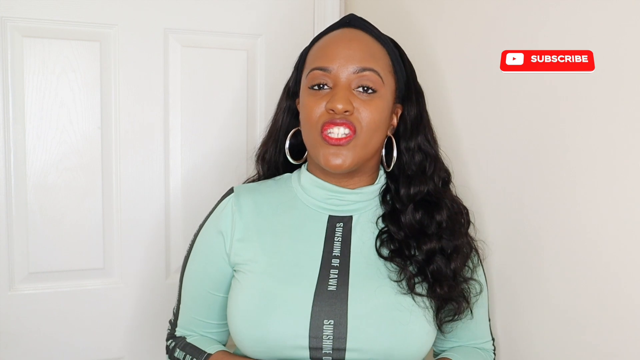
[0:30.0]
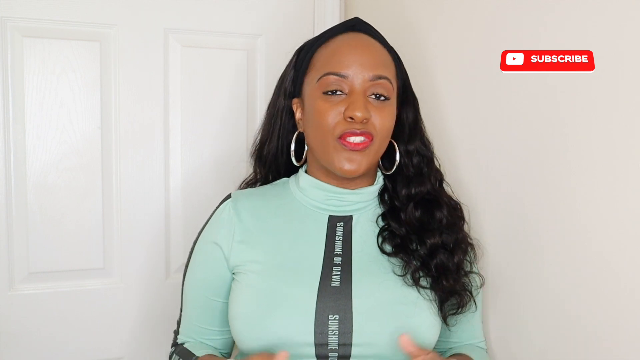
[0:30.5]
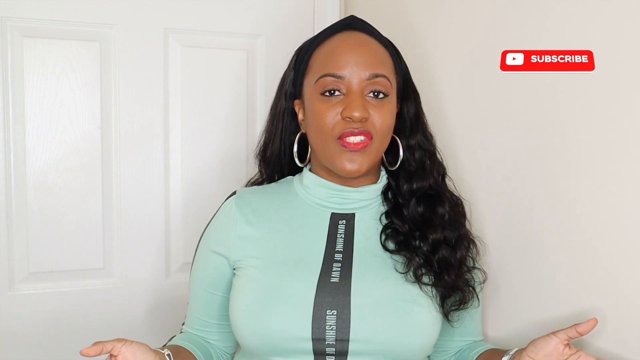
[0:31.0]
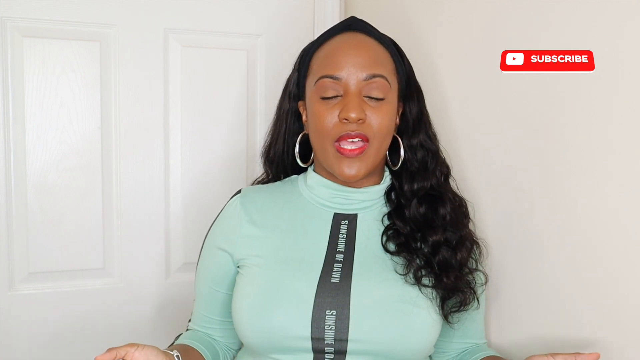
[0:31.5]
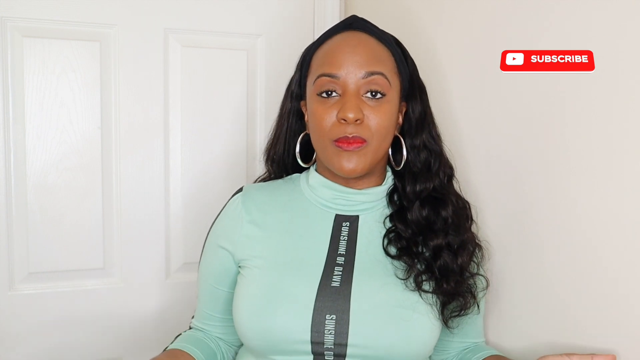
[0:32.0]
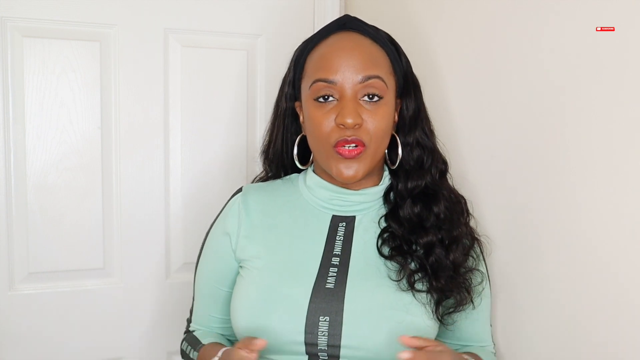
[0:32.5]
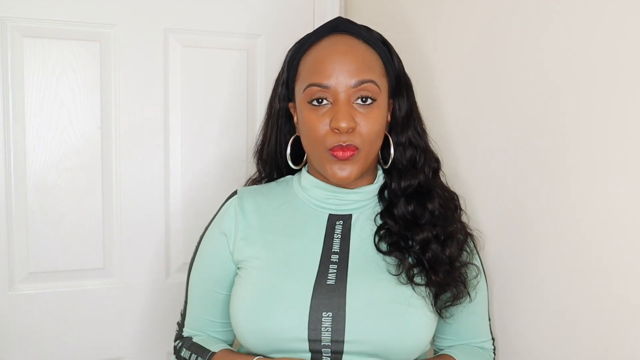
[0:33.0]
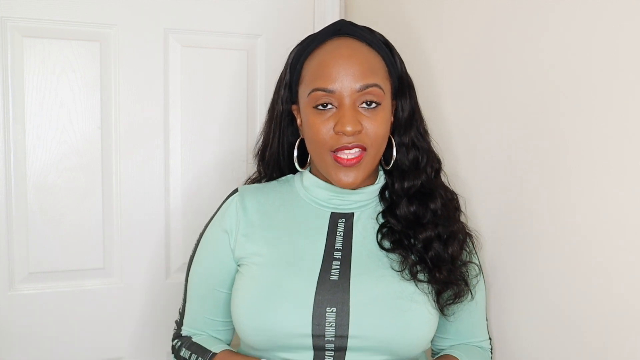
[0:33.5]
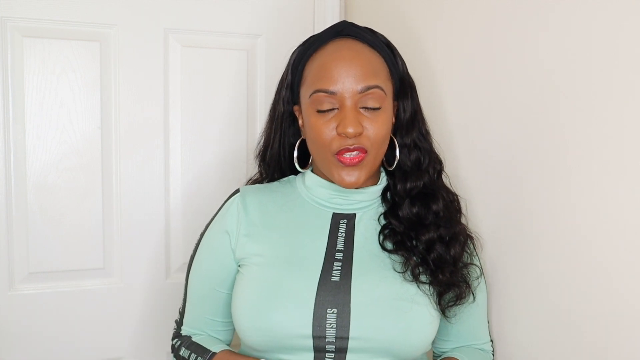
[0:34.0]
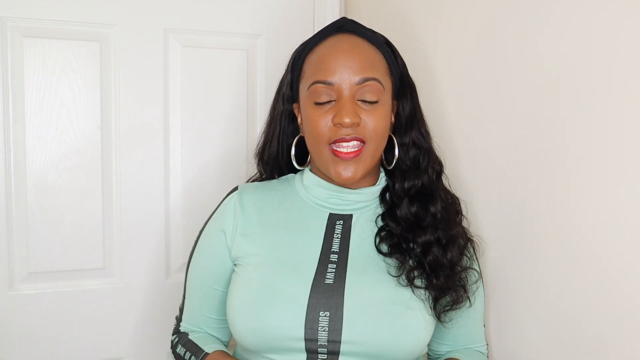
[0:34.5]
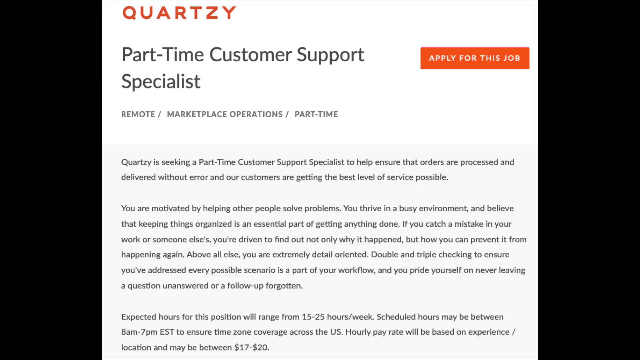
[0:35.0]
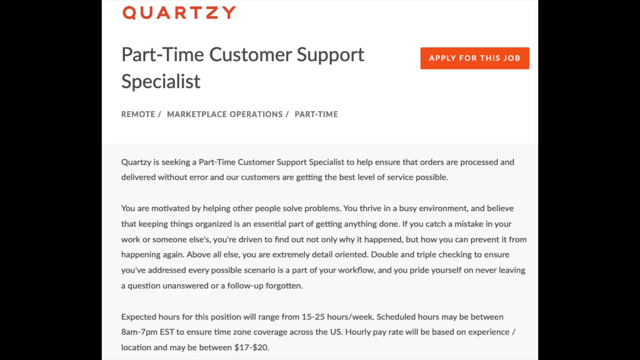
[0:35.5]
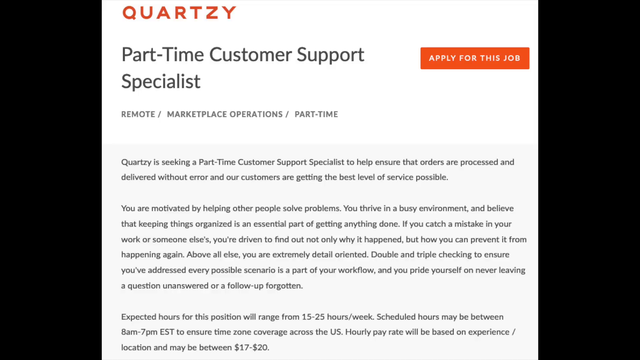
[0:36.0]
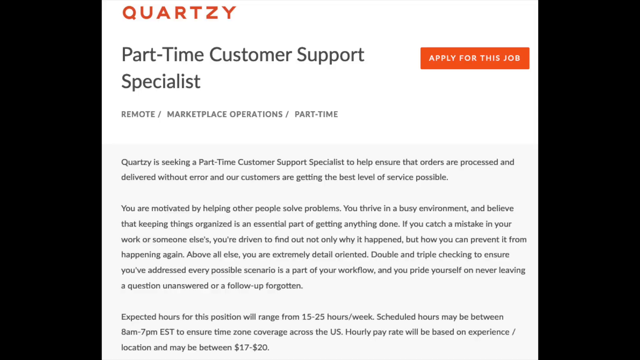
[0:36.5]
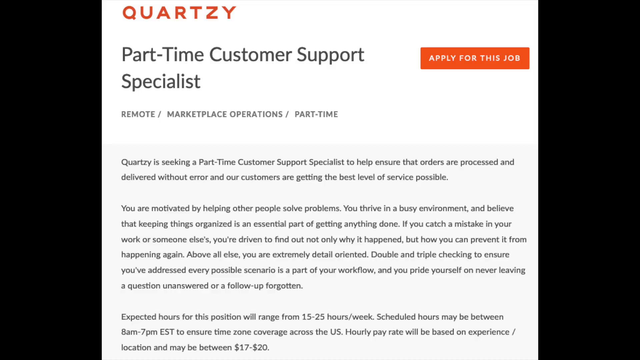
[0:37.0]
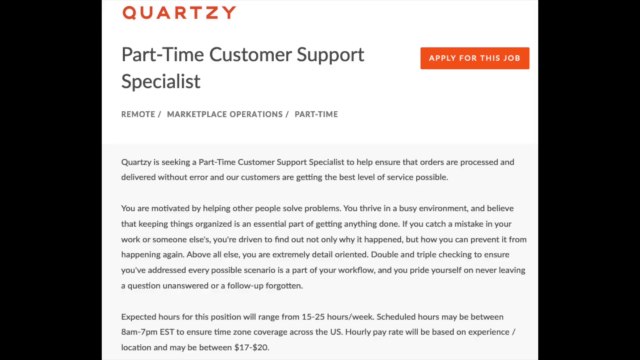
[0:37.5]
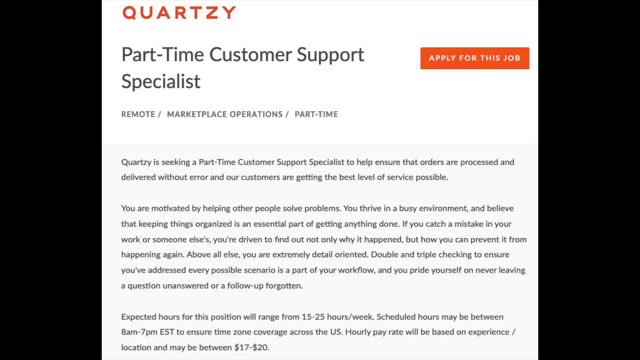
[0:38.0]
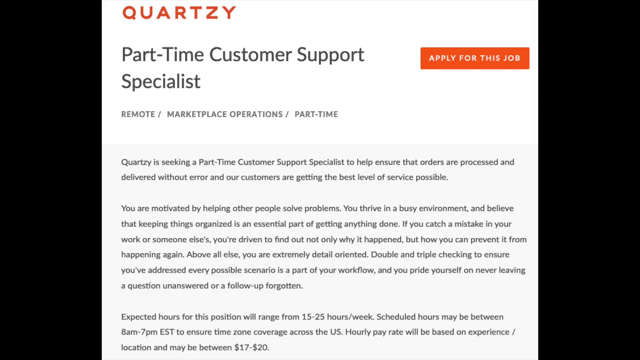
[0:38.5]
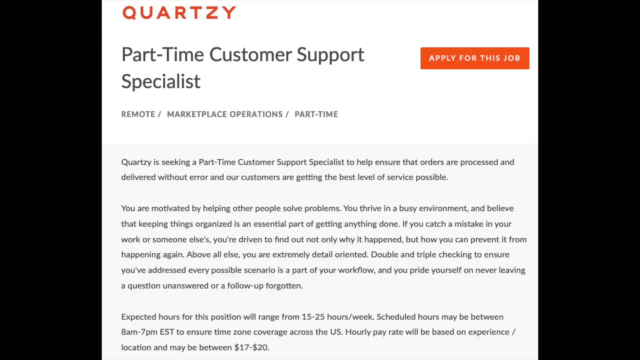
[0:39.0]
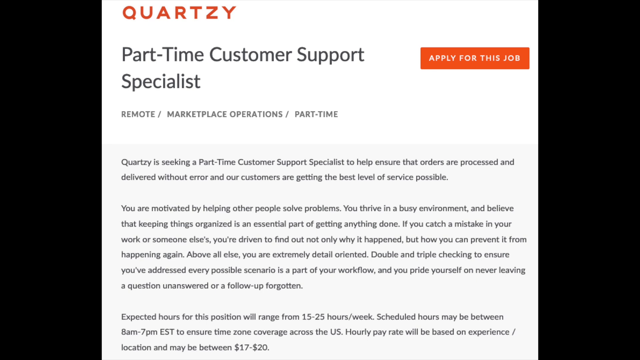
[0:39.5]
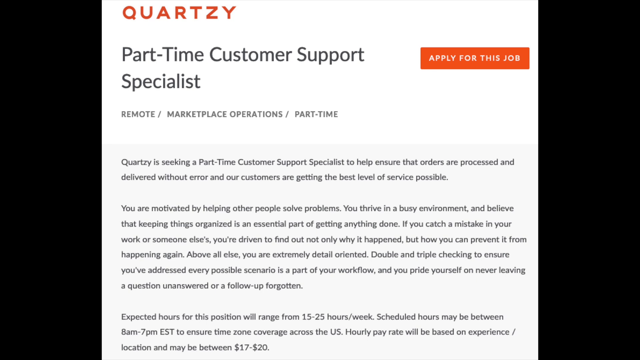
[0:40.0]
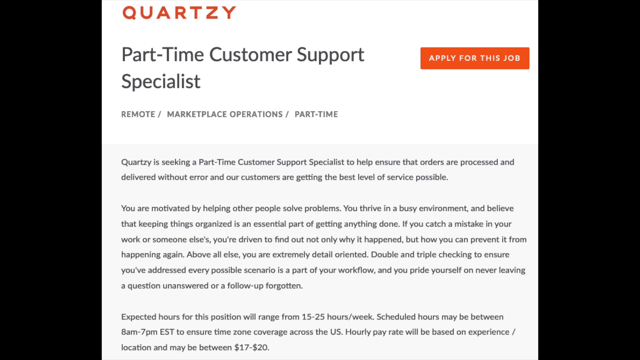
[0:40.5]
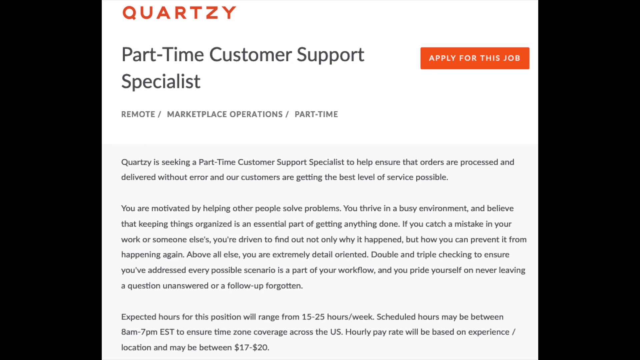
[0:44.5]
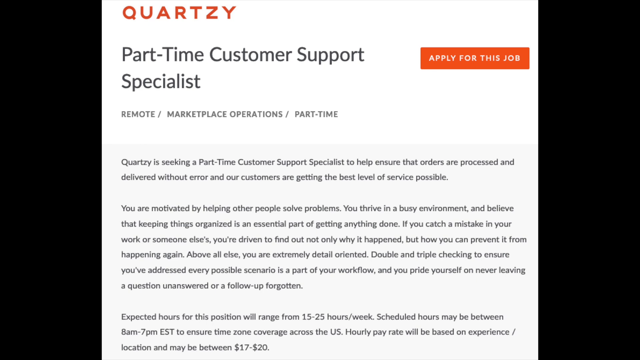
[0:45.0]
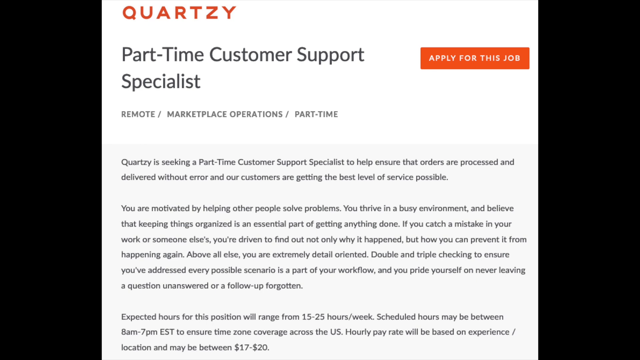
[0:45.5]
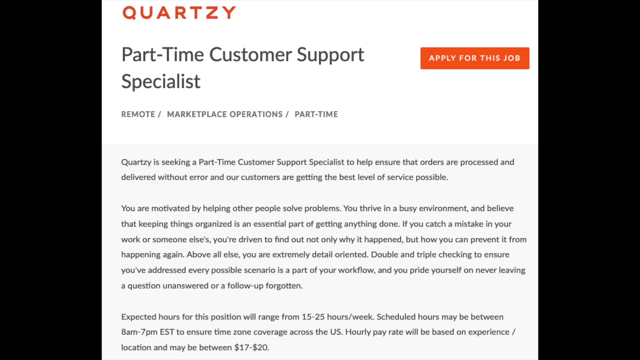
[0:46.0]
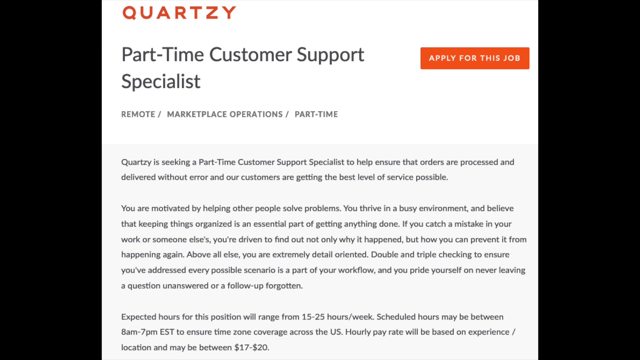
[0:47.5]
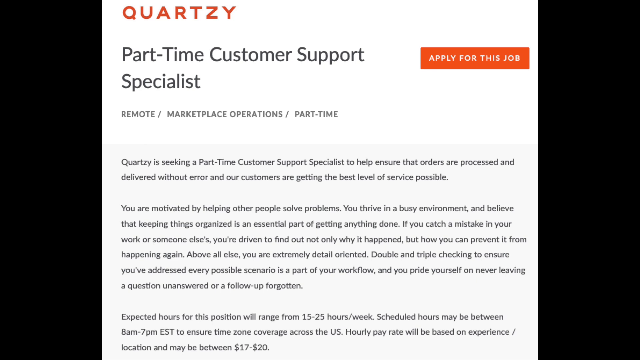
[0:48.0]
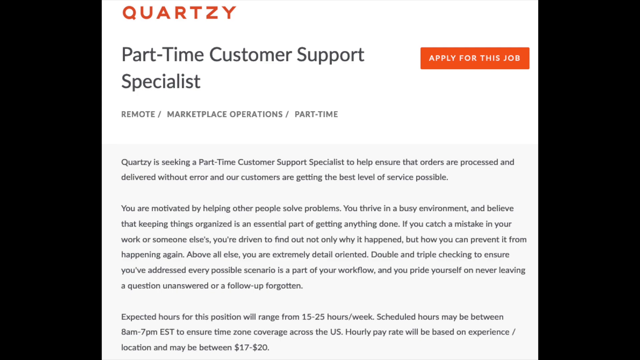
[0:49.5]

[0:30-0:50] The camera kind of zooms out, showing more of the front of the woman. Her tight teal mock-turtleneck shirt has black bands with white writing running down the center of the shirt and onto the sleeves. She has a full face of makeup with red lips, silver hoops, and a black headband holding back her curly hair, part of which is behind her shoulder and part over her shoulder and past it. With more of her body visible, her arms and hands can be seen, including some kind of silver bracelet, and she moves her hands around animatedly as she talks. The video then switches to what appears to be a job description. At the top, "Quartzy" appears in orange, apparently the job board. The description is on a white background with black and gray lettering and is for a "part-time customer support specialist" position, listed as remote and part-time. To the right is an orange box with white writing reading "apply for this job." The page stays on screen for a long time, listing the type of job, the duties, the expected range of weekly hours, the time frame, and the pay.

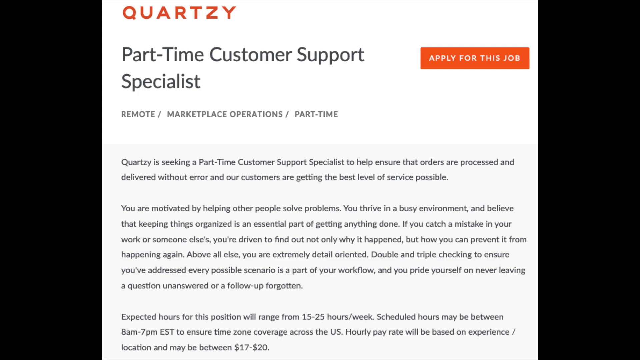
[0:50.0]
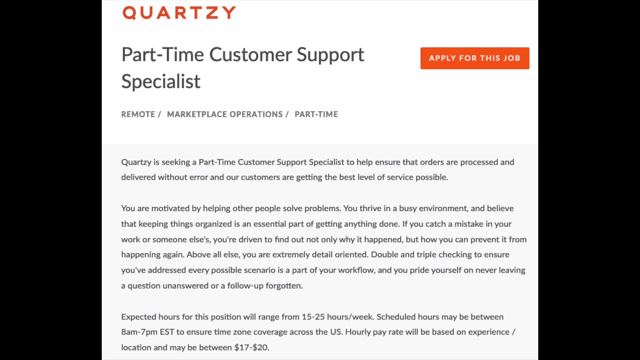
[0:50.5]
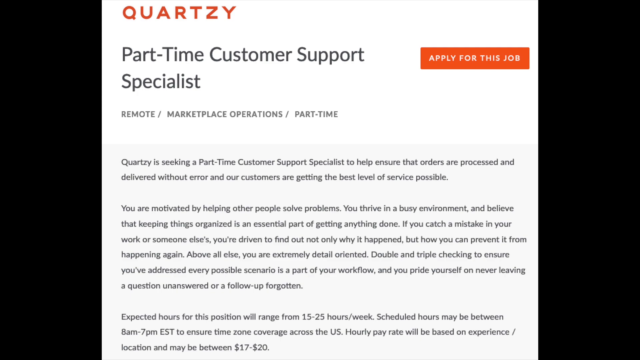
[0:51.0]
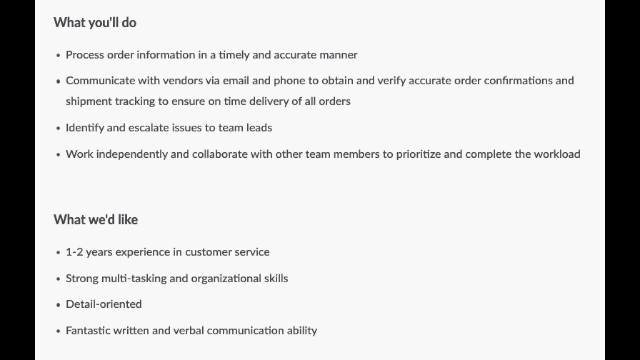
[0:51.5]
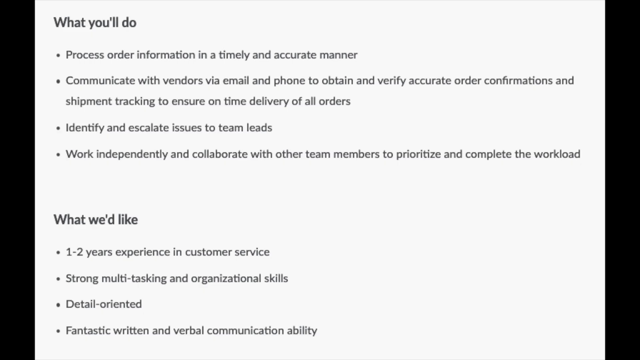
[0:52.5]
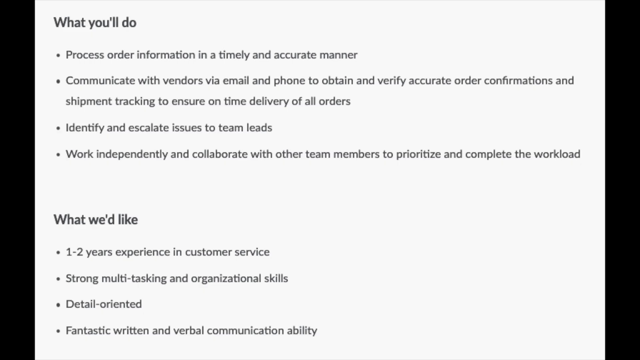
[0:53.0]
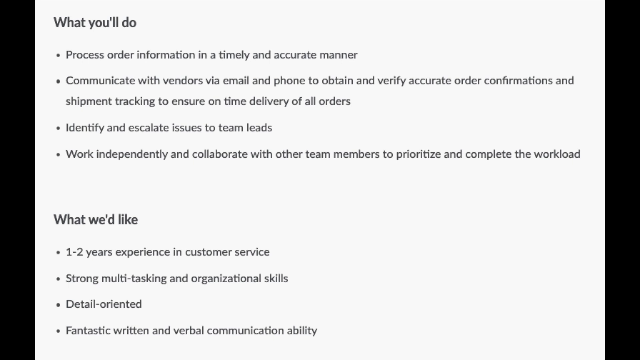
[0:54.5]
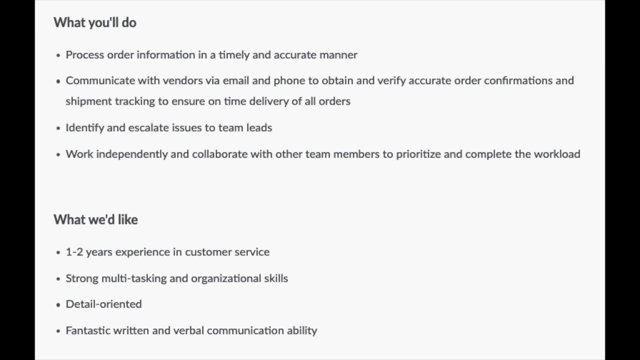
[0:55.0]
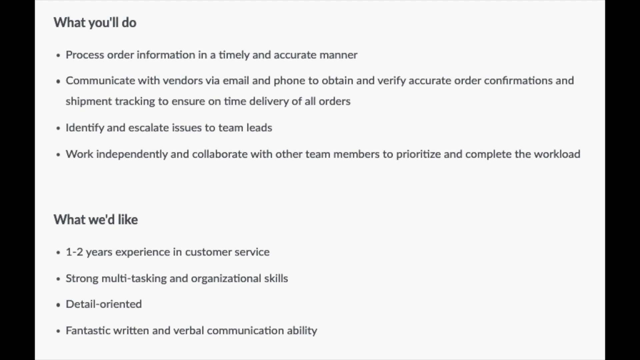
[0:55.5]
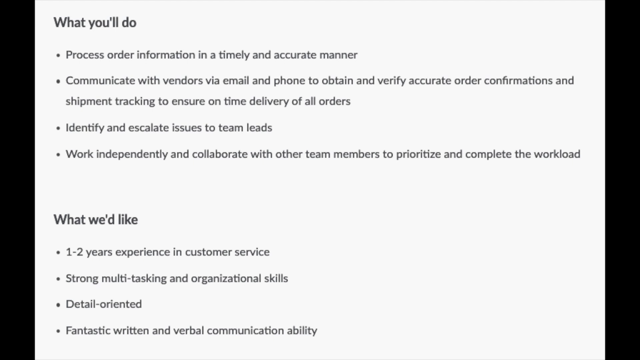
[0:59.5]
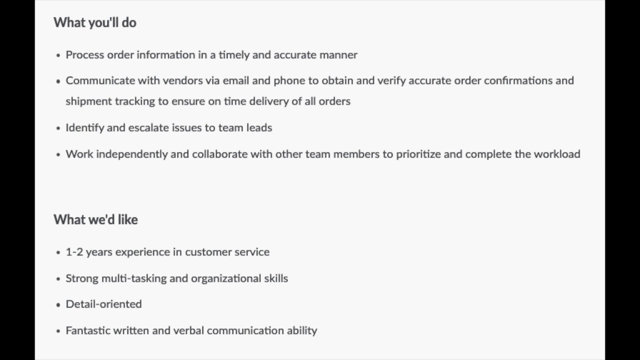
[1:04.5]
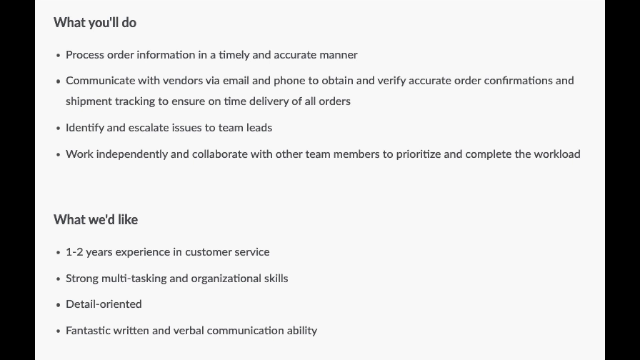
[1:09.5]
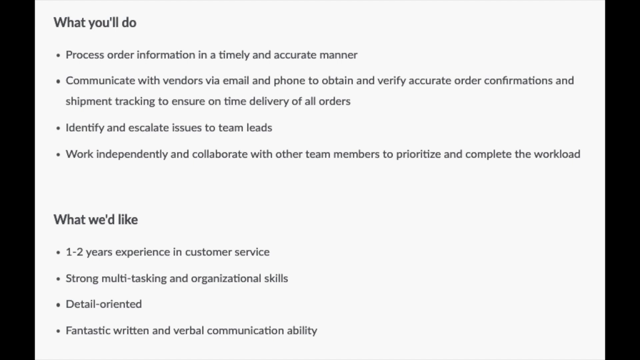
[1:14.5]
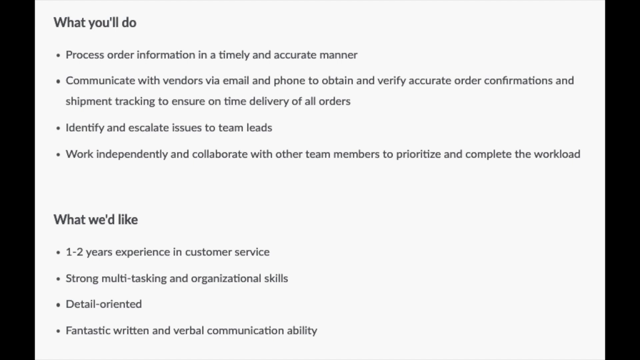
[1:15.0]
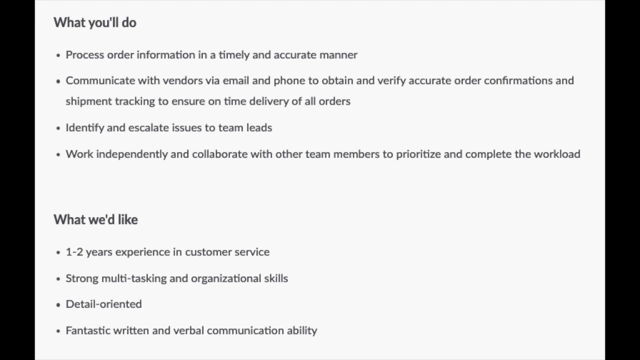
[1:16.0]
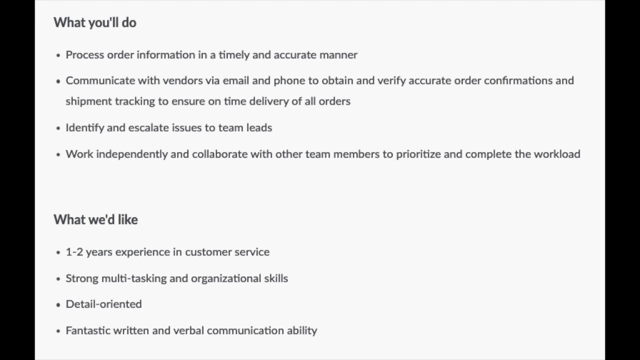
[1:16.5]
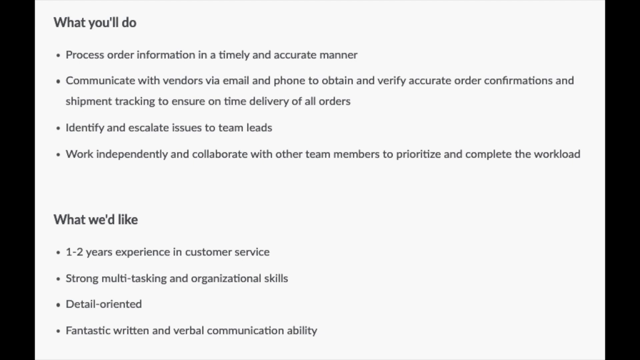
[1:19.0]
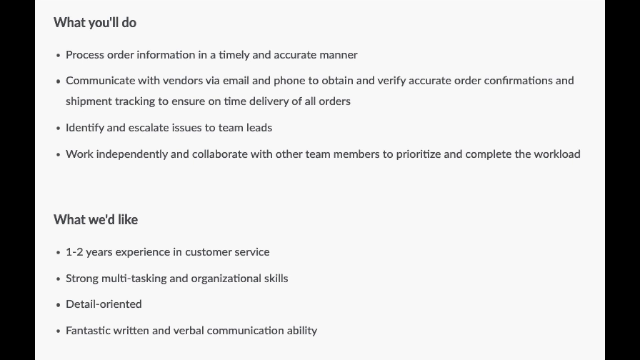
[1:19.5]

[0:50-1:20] The job description is briefly on screen against a black background. "Quartzy," in orange, is in the top left corner and appears to be a job board, though this is not entirely clear. The description is written on white with black and gray lettering. Right under "Quartzy," big black letters read "part-time customer support specialist." Underneath, in gray, kind of slanted letters, it lists remote, marketplace operations, and part-time. To the right is an orange block reading "apply for this job," presumably clickable, and below that a grayer box gives more of the description. The screen then switches to the duties: inside a black outline, an all-white background with black lettering fills most of the screen. In bold at the top is "what you'll do," followed by four bullet points: processing order information, communicating with vendors through different communication channels, identifying and escalating issues, and working independently and collaboratively. Next comes "what we'd like," listing one to two years of customer service experience, strong multitasking and organizational skills, being detail-oriented, and great written and verbal communication.